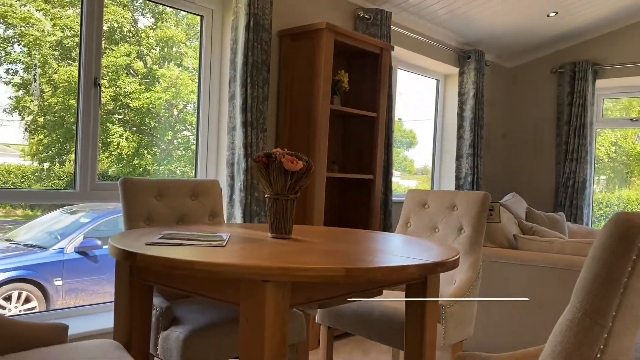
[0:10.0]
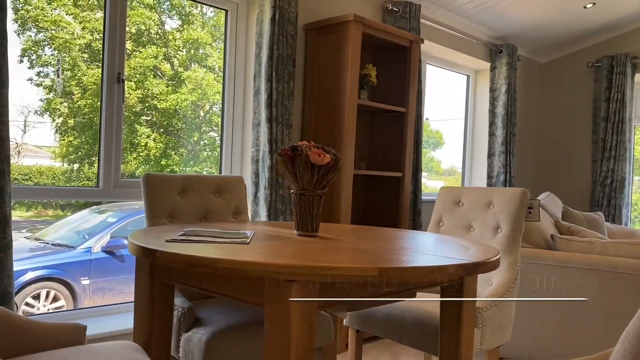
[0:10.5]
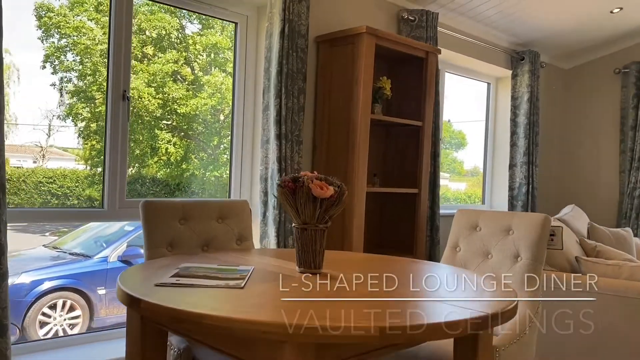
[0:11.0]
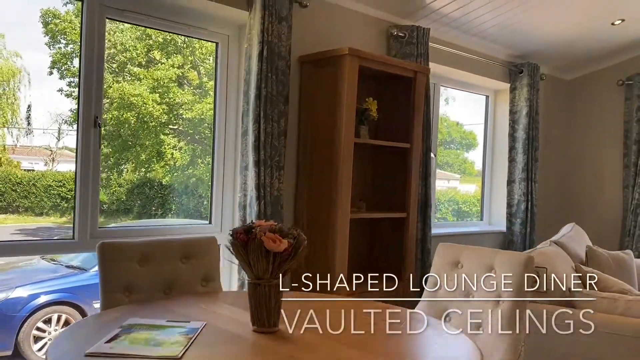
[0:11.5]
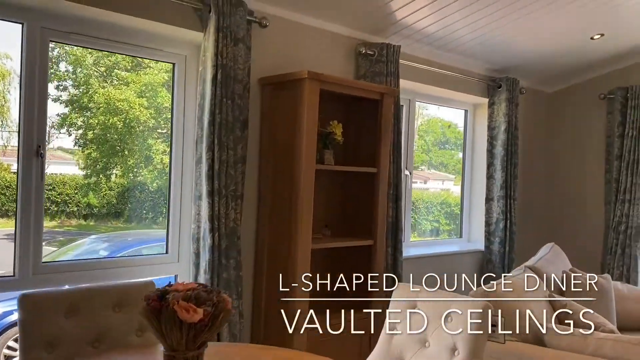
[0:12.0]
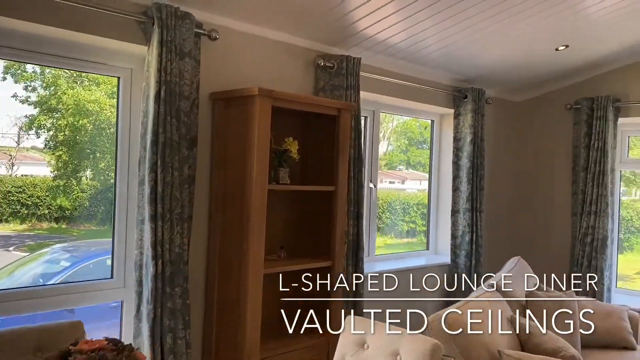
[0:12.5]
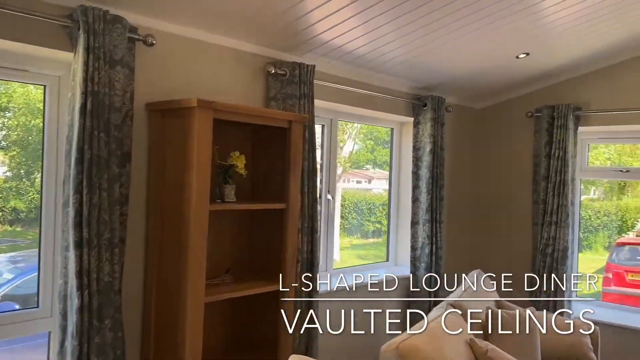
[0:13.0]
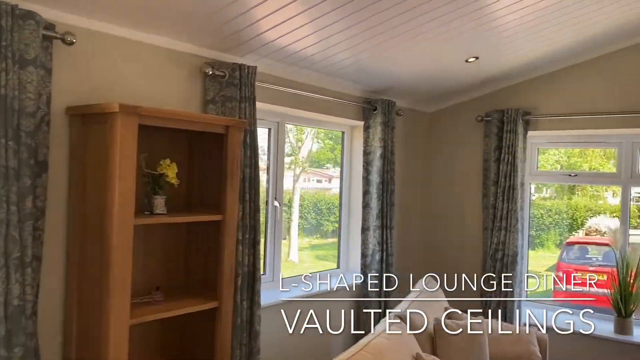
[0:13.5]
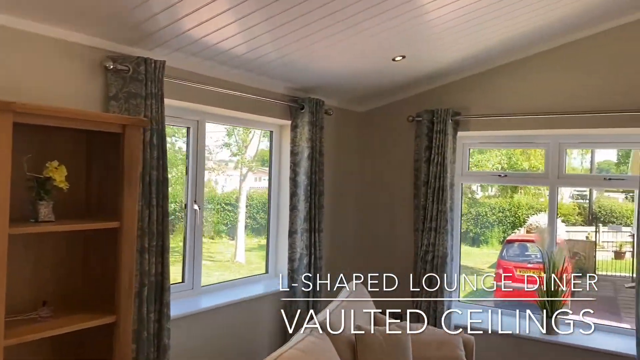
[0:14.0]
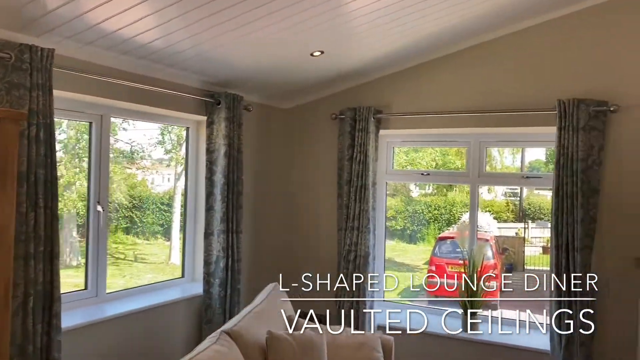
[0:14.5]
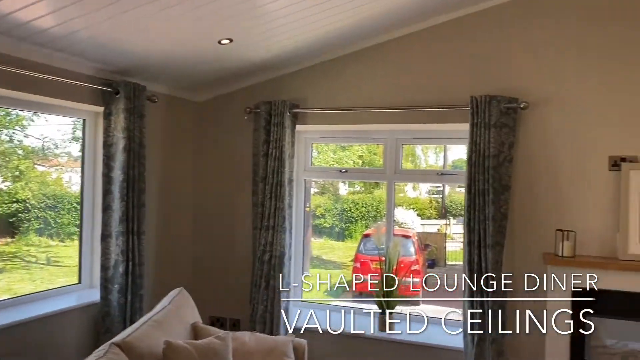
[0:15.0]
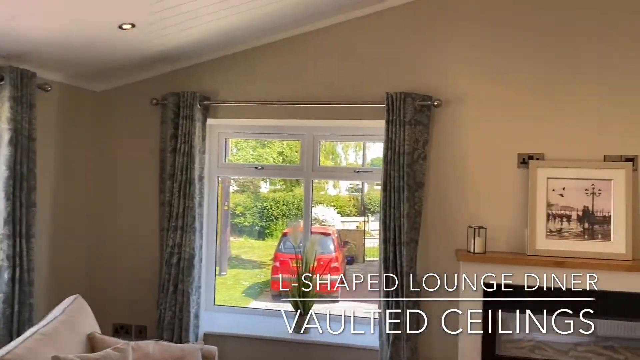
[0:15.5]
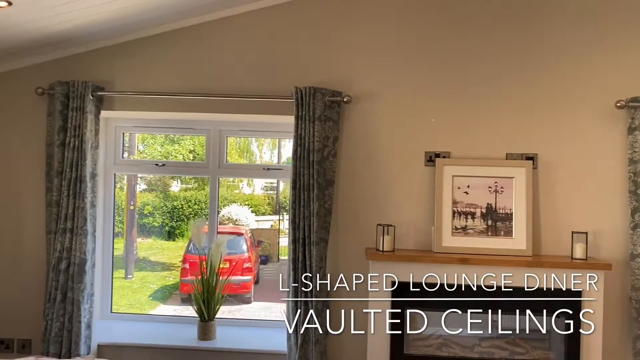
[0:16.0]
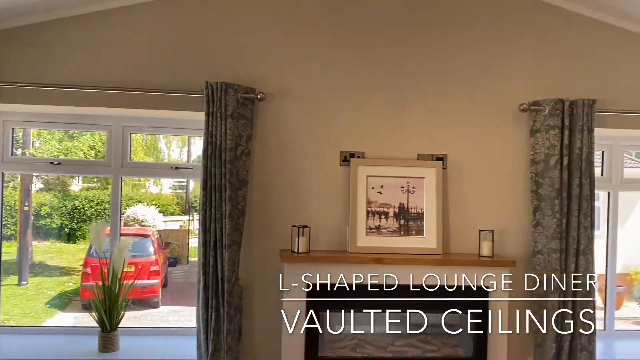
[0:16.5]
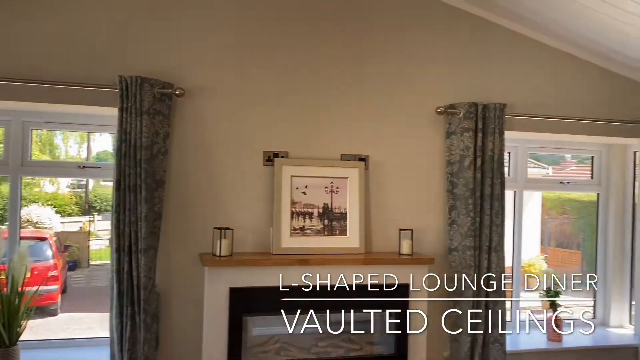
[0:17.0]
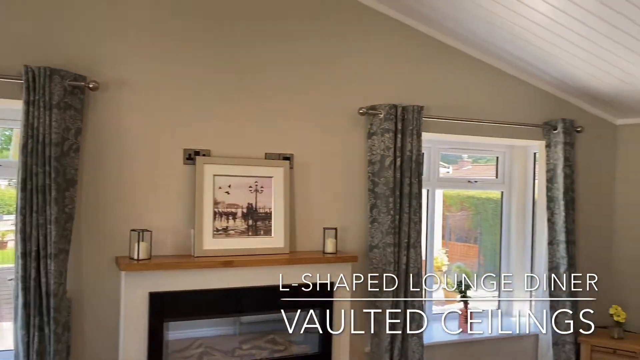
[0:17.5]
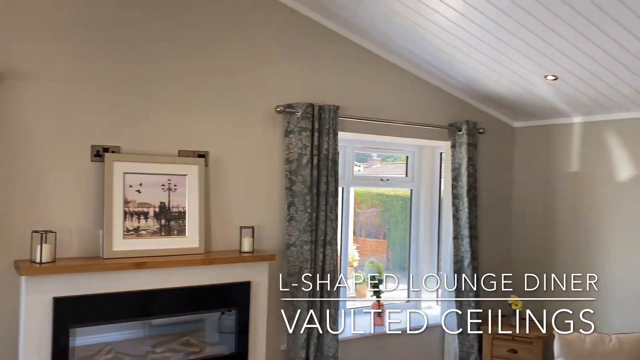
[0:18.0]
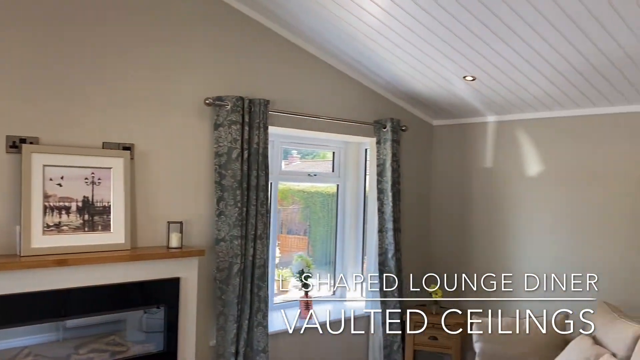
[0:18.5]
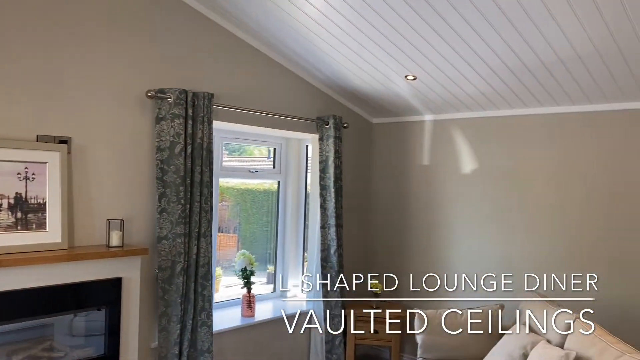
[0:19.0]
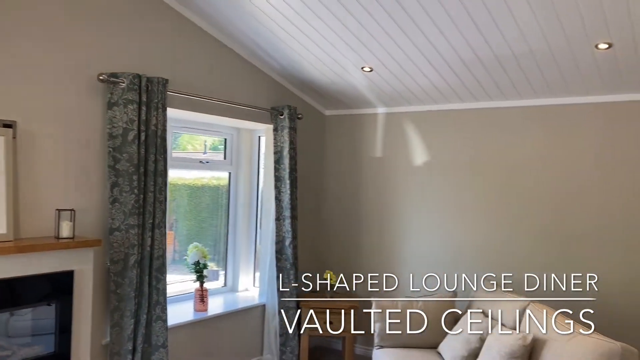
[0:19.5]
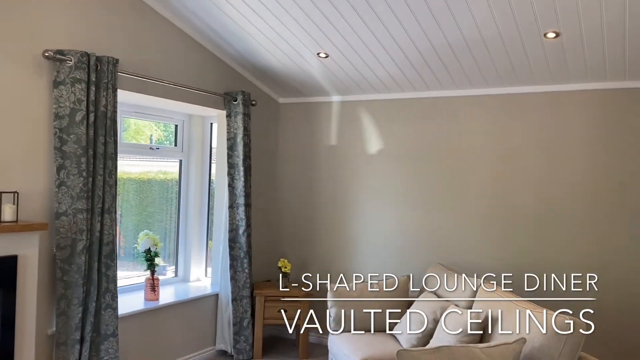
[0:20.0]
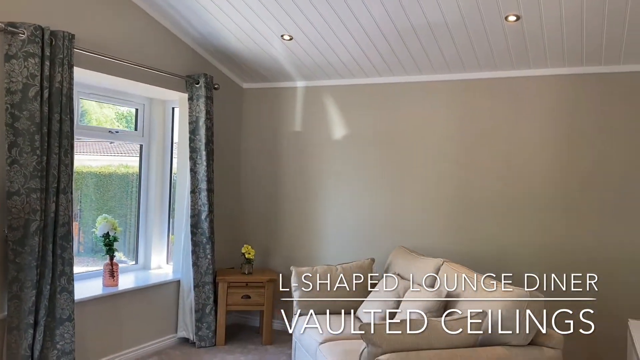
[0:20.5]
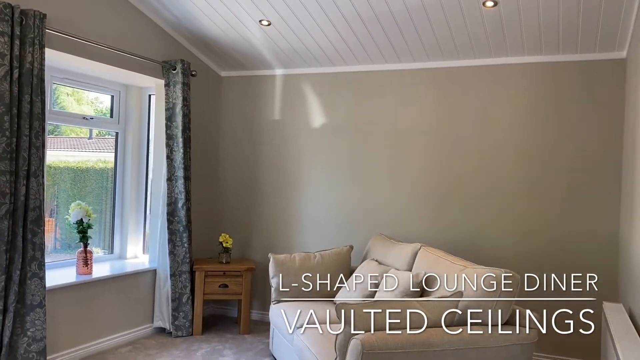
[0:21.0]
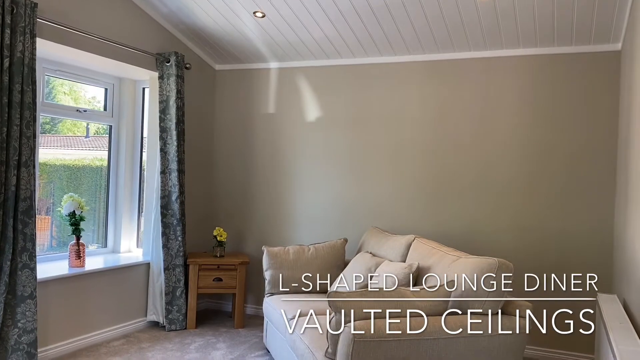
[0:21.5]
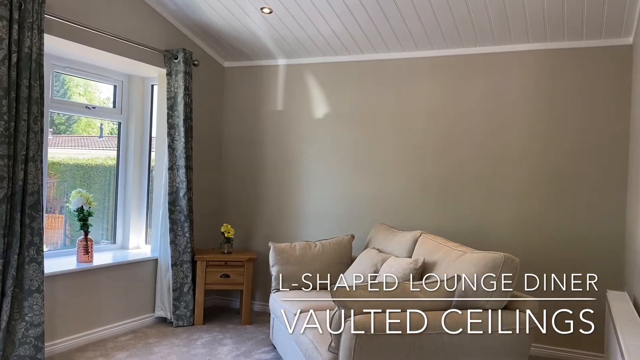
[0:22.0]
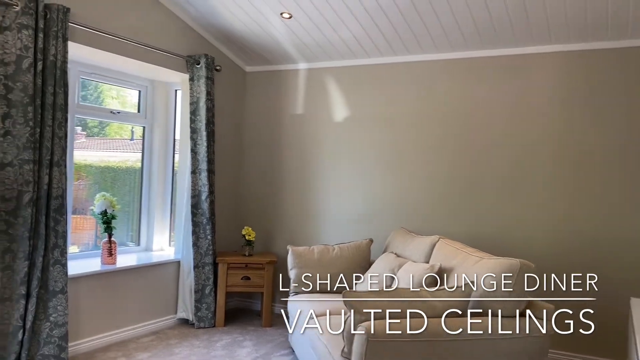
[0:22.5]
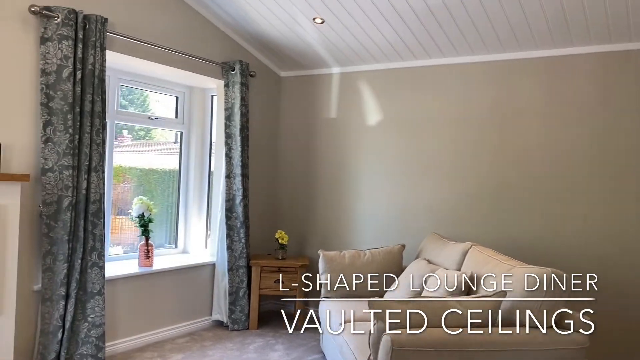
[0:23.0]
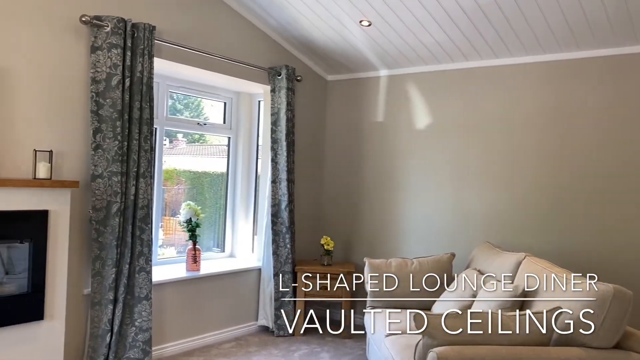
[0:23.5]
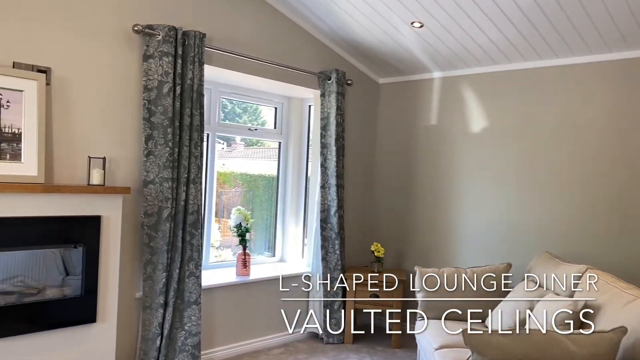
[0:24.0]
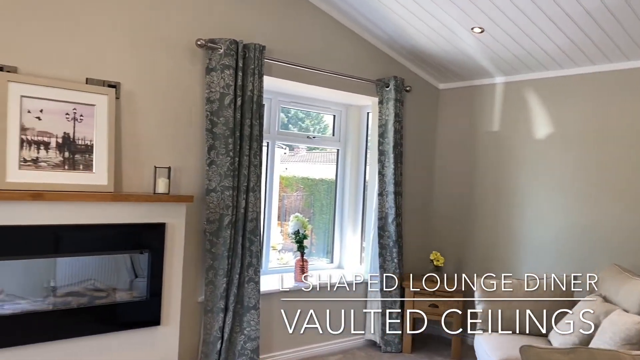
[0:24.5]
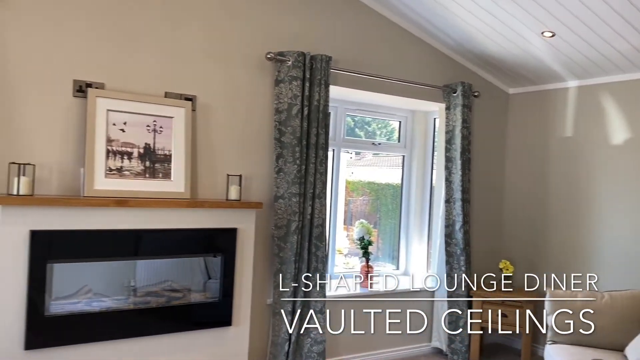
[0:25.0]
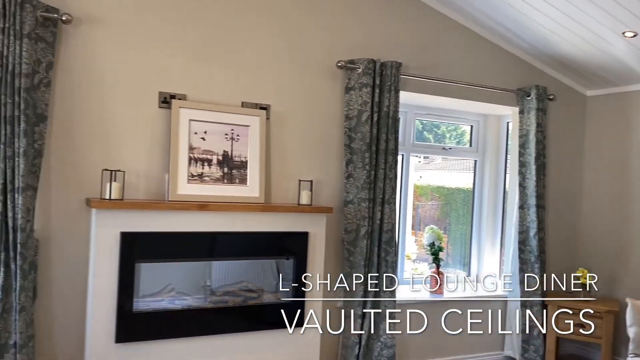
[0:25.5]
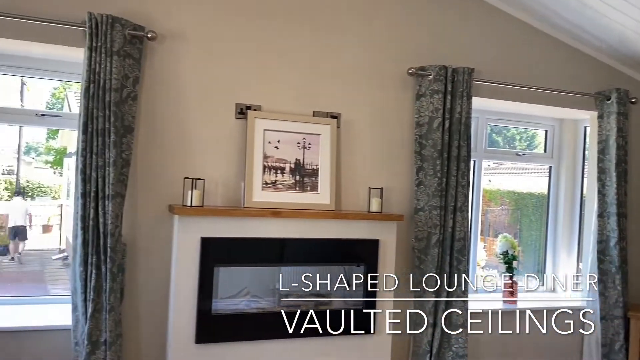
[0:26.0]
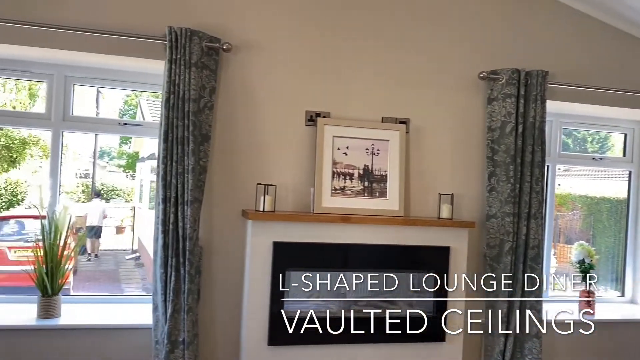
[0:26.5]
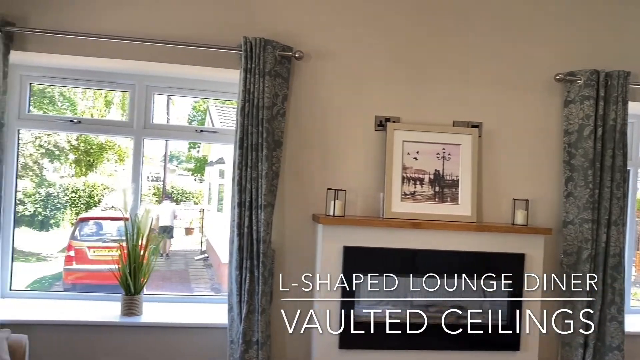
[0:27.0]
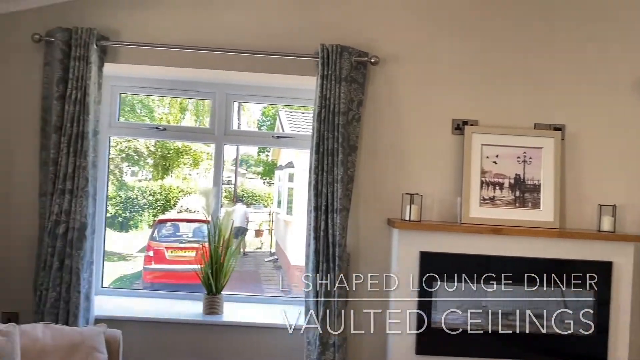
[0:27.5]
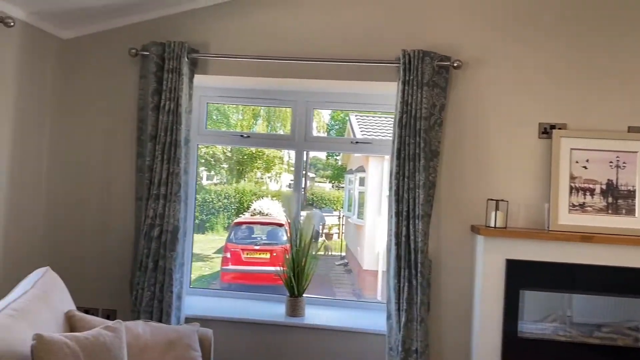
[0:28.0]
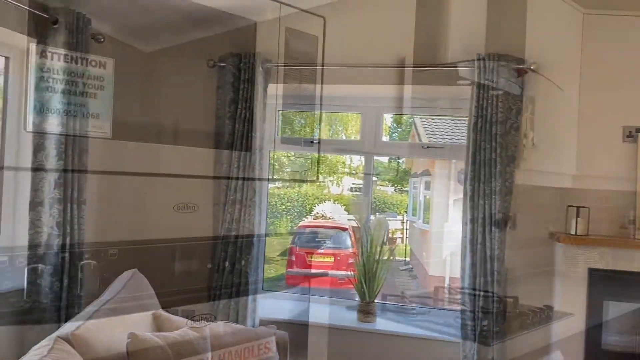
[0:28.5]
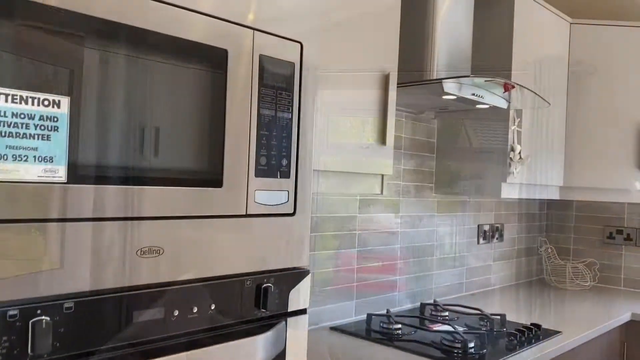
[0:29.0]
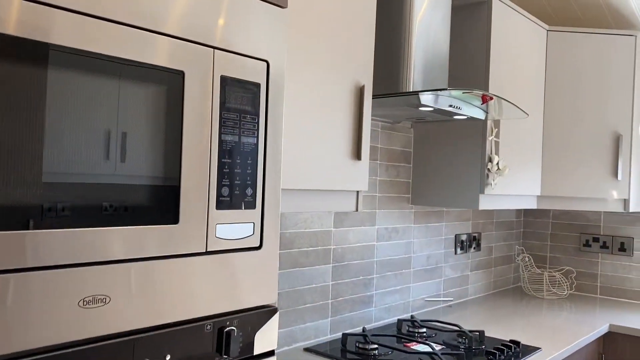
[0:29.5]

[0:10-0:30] Inside the home, a circular table is in front of the camera, and captions appear reading "L-shaped lounge diner" with "vaulted ceilings" below. Beyond the dining table is a small cabinet with three visible shelves; only the top one seems to have a potted yellow plant on it. To the right is a sofa or couch with pillows, and through the windows on the left a blue car is visible. As the camera pans right, a red car can be seen outside. Panning further reveals the upper part of a fireplace with two candles on top, one on each side, and a framed black and white photo in the middle. As the pan continues, another sofa with a little table beside it comes into view, along with a window on each side of the fireplace. The scene then changes to the kitchen, which appears to have a stove, an air vent, and microwaves and an oven on the left side of the stove.